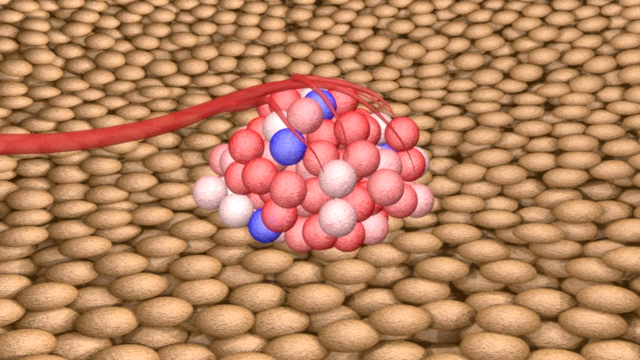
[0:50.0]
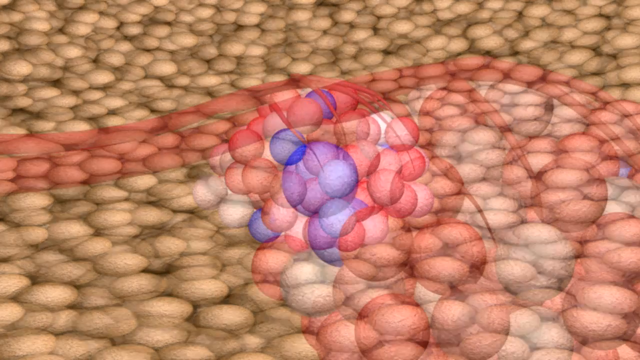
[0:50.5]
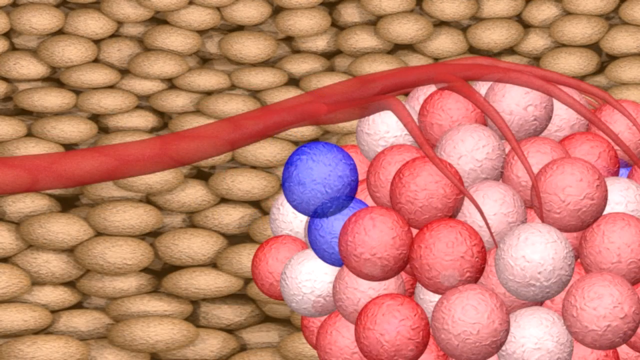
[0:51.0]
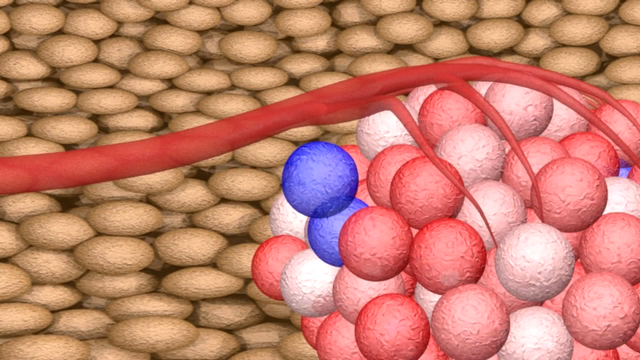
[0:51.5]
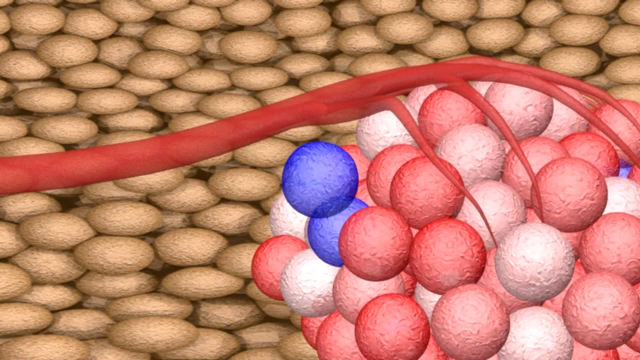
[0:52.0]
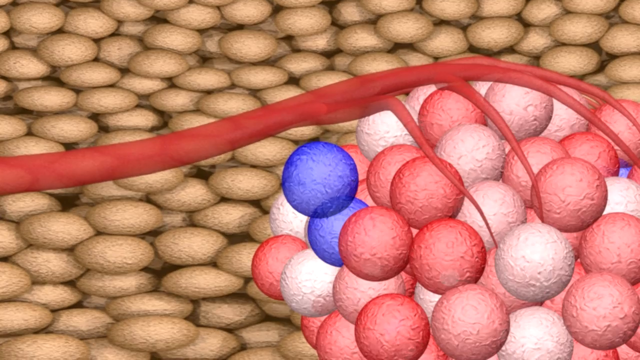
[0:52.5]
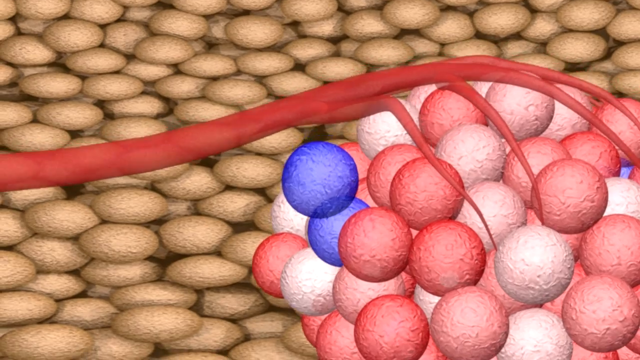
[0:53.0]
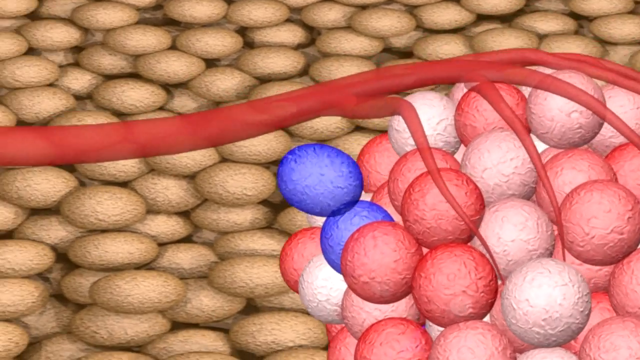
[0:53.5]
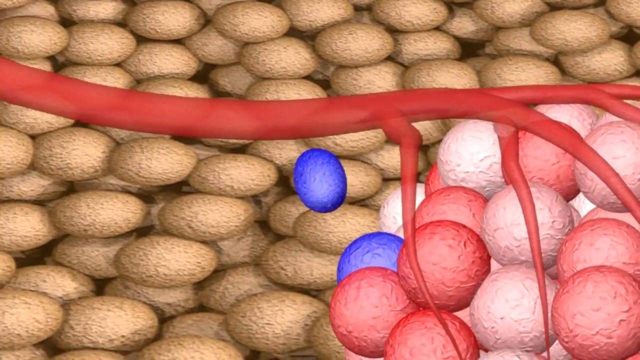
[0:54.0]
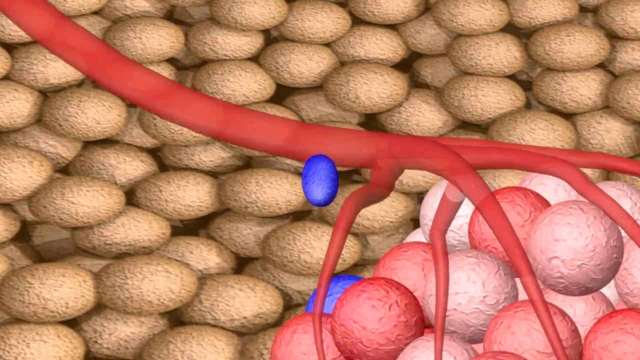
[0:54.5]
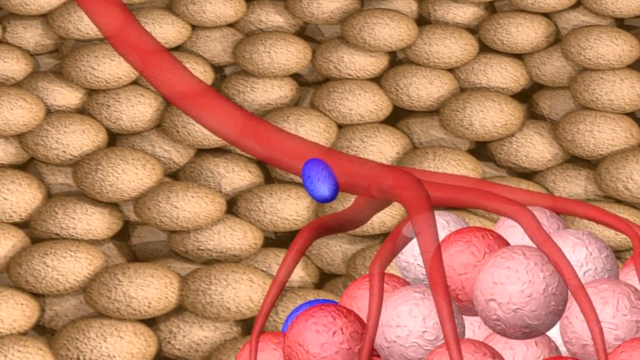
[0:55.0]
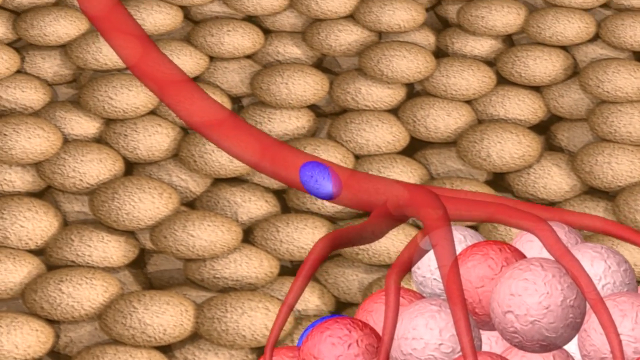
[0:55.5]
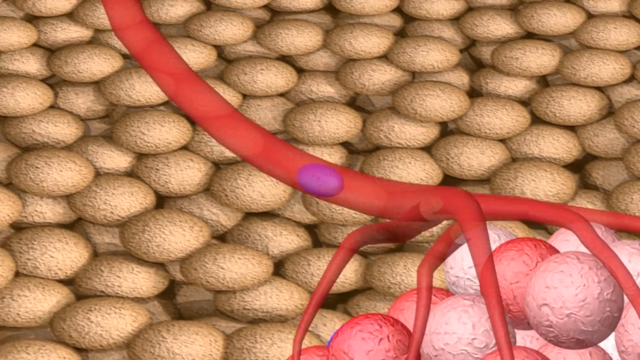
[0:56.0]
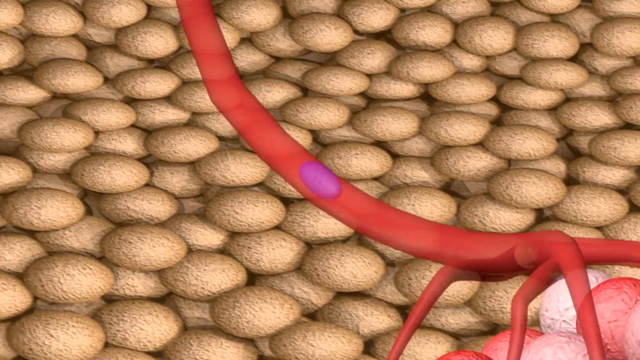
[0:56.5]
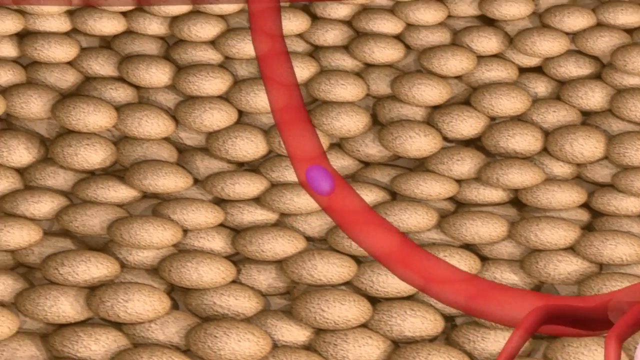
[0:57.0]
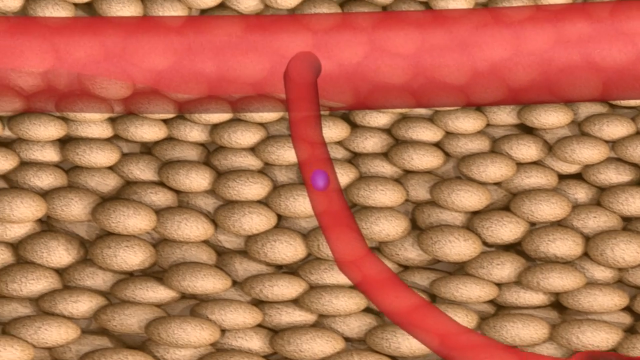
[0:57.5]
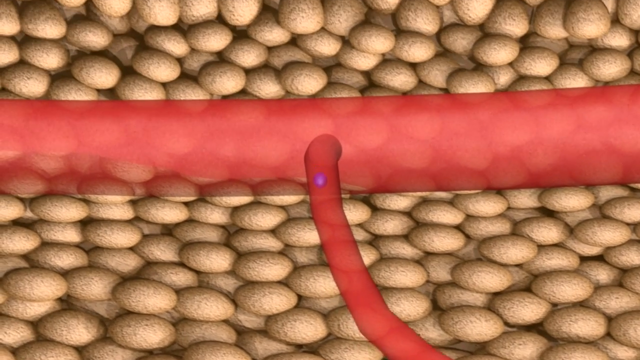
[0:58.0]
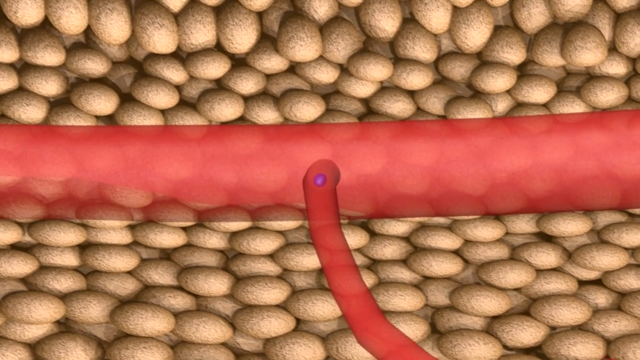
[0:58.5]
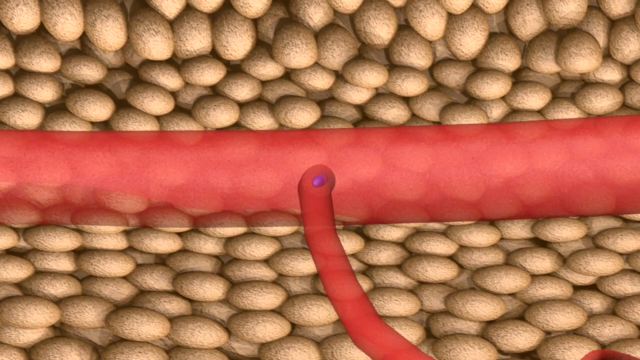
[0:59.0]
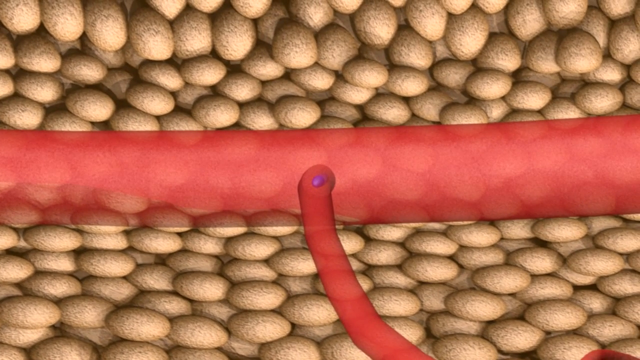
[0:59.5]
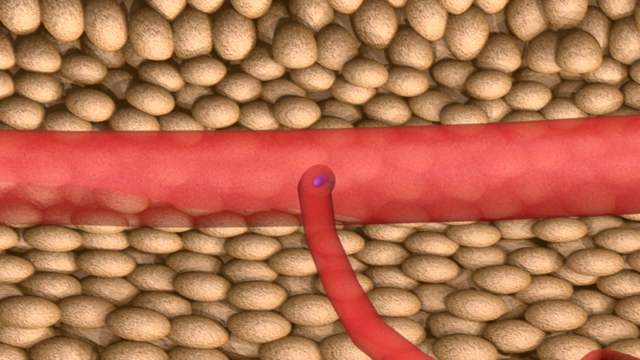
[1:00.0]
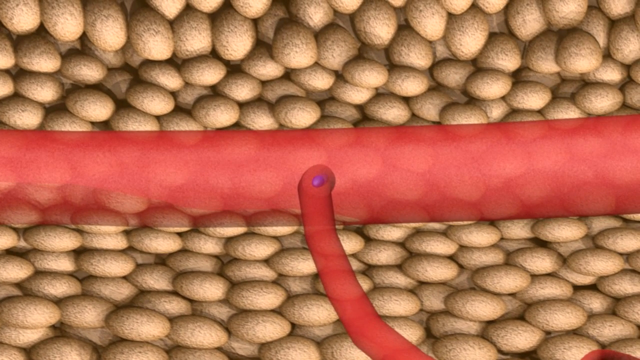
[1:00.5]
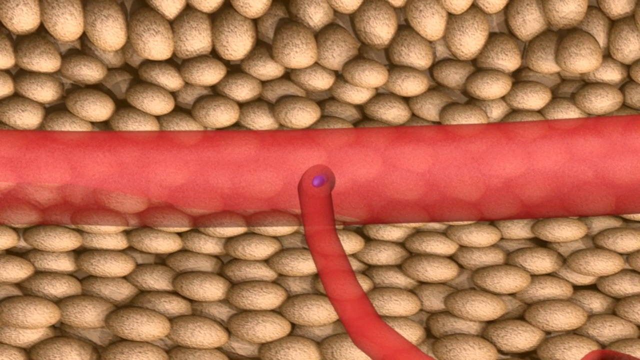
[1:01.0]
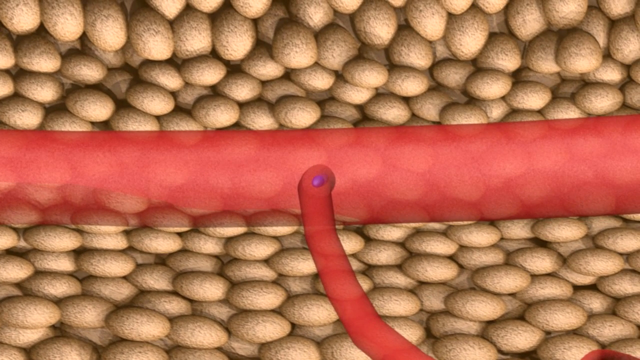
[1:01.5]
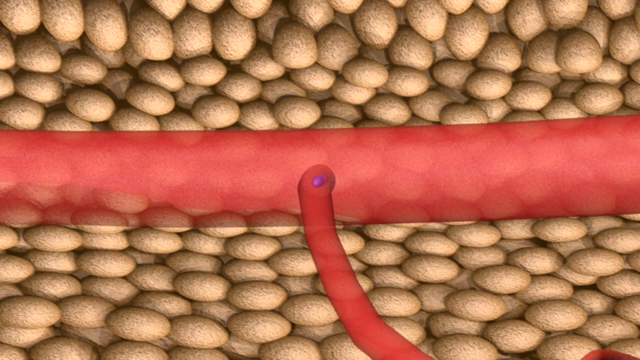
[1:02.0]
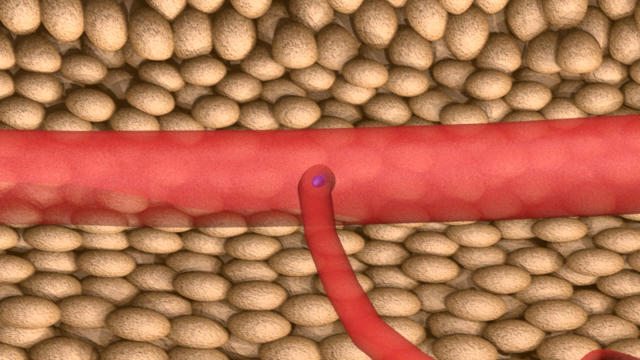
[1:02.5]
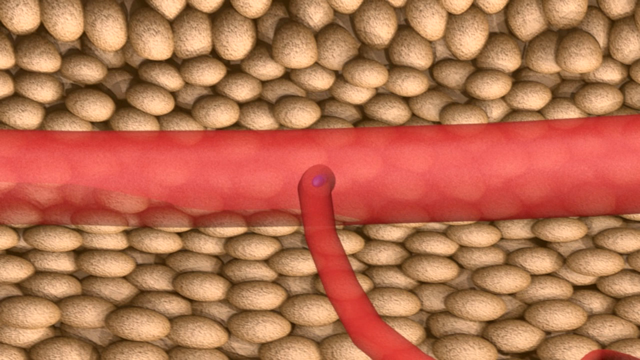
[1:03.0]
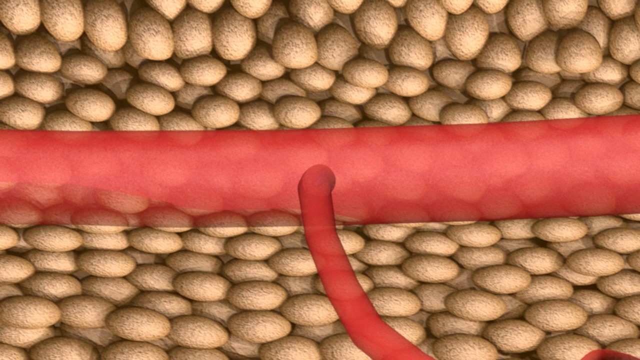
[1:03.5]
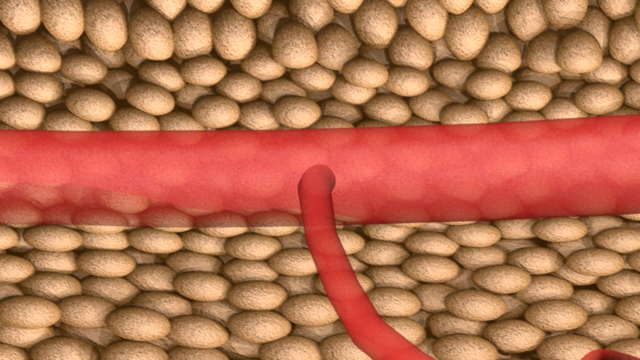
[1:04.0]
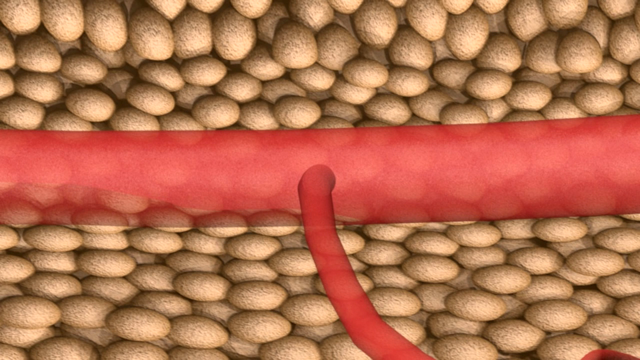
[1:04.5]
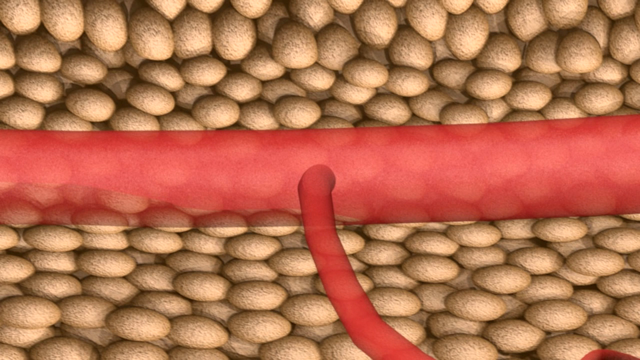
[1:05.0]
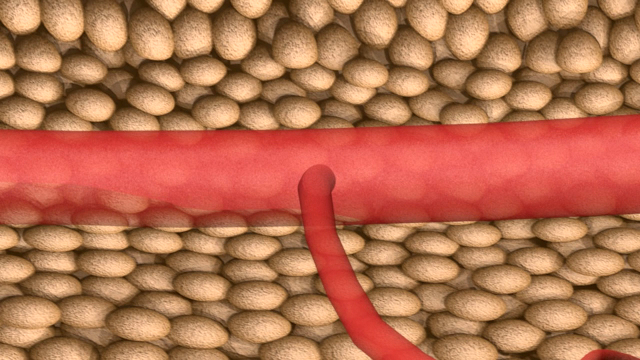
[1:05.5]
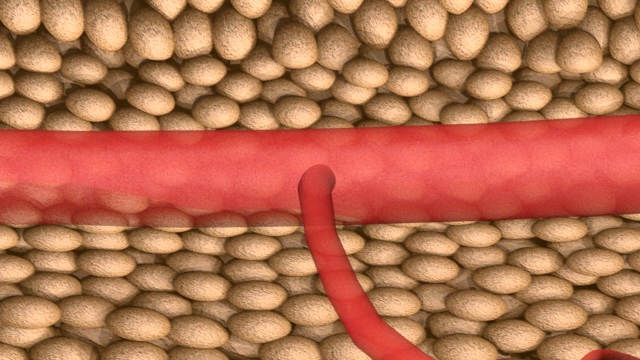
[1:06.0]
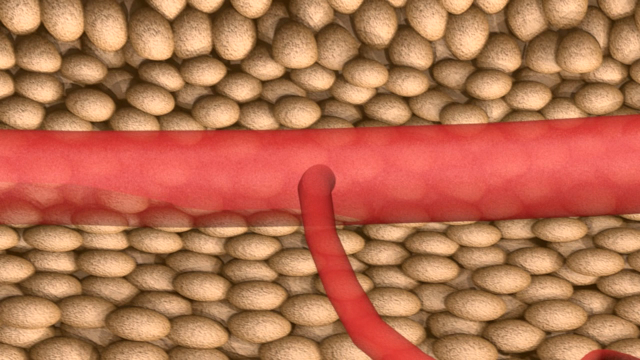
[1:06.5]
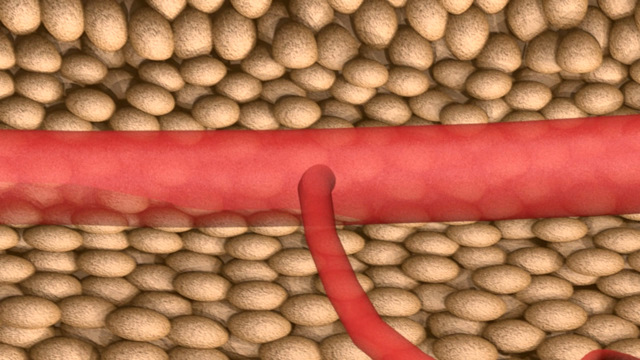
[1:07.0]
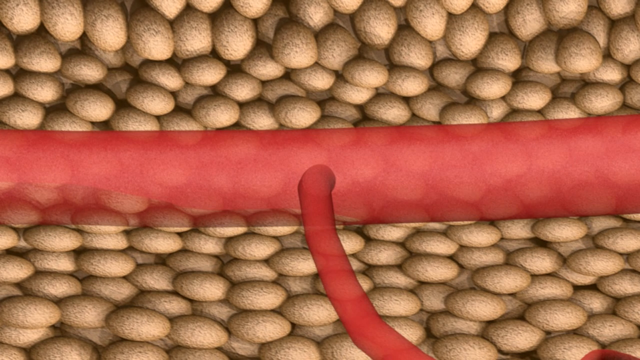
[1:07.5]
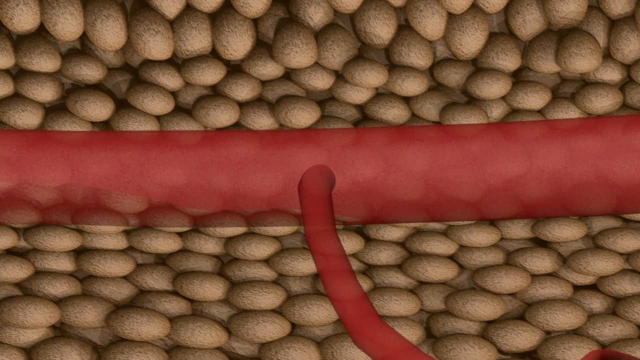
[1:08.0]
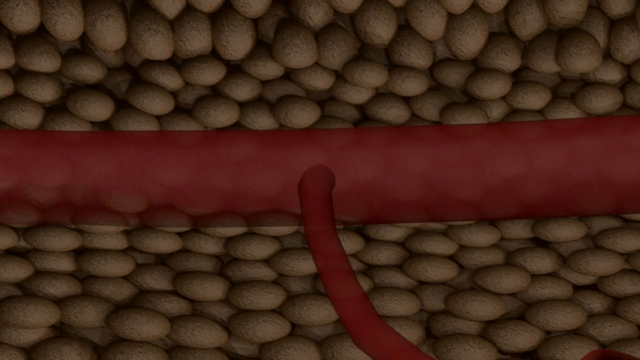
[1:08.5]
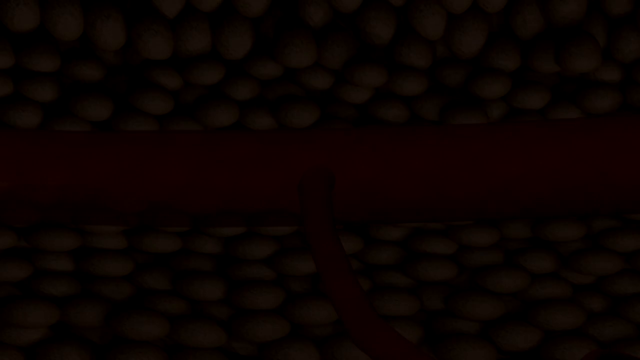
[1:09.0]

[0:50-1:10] A close-up view shows the blood vessel that has grabbed onto the large mass. The blue, white, and red cells look slightly bumpy on top. One blue cell at the back, near where the vein connects to the mass, breaks off the cluster. The oval-shaped blue cell enters the large blood vessel, and the blue inside the red tube forms a purple color. The blue cell rides up the large vein into an even bigger vein. When it reaches the top of the intersection where the small vein and large vein meet, it pauses, then the shape fades away and it is impossible to tell which direction it went. The screen then fades to black.